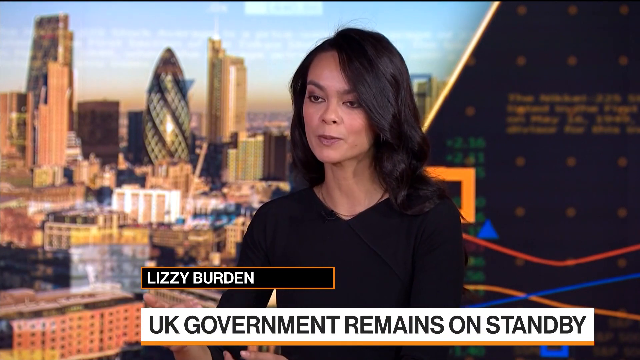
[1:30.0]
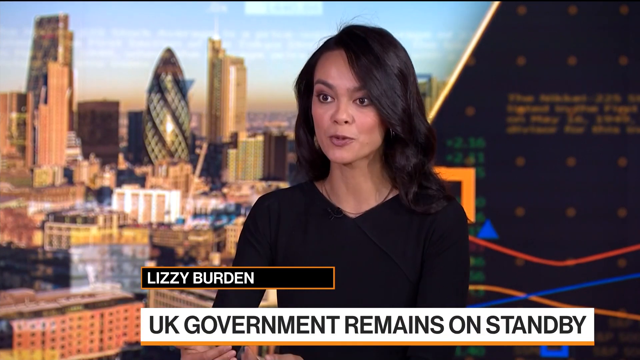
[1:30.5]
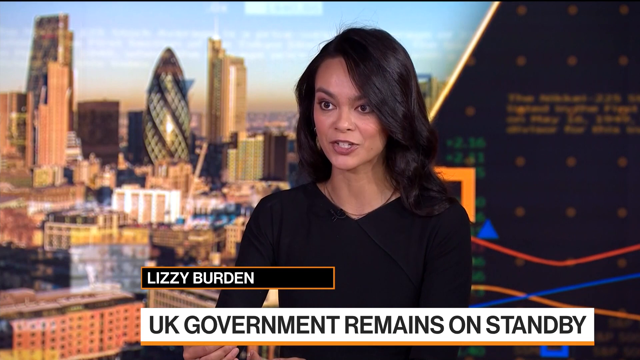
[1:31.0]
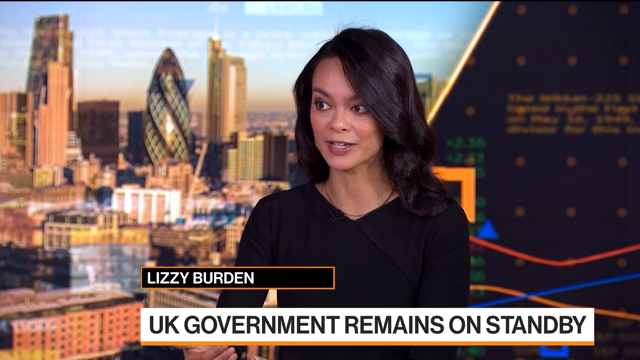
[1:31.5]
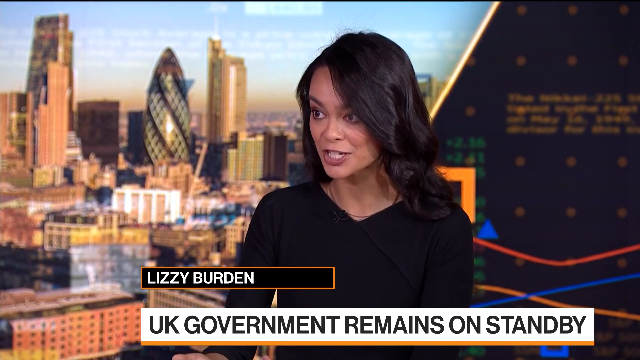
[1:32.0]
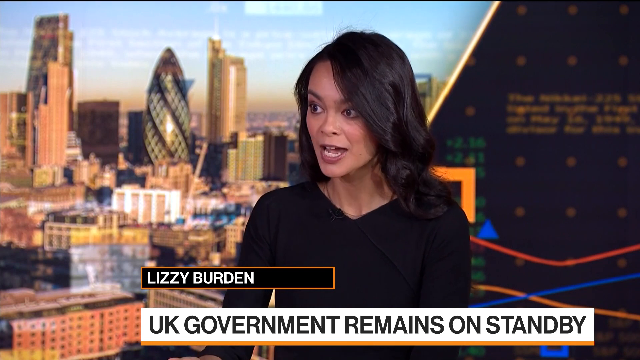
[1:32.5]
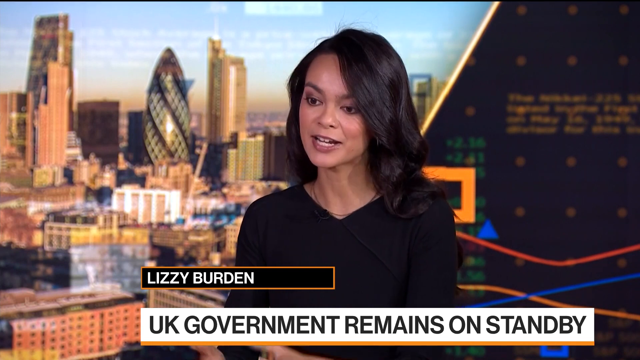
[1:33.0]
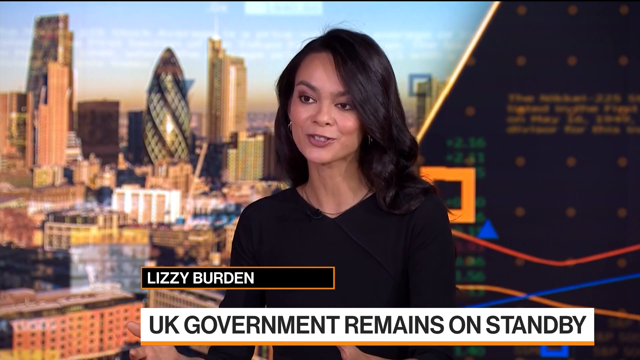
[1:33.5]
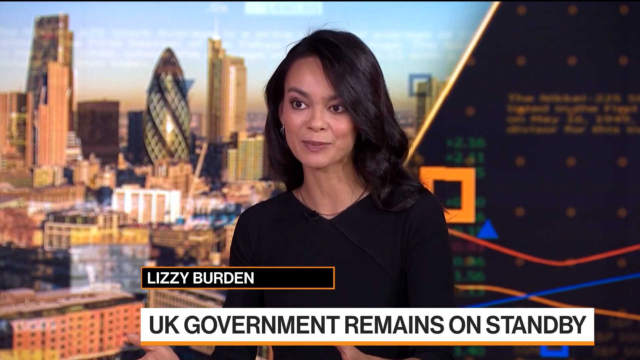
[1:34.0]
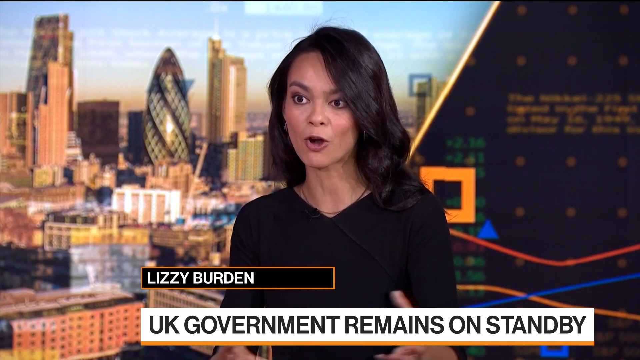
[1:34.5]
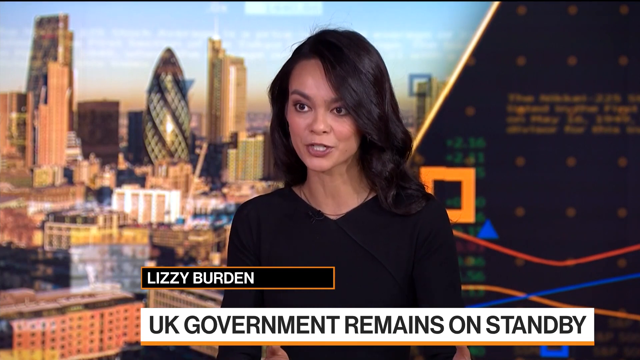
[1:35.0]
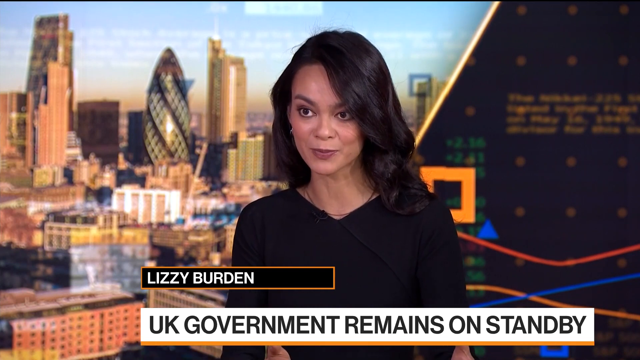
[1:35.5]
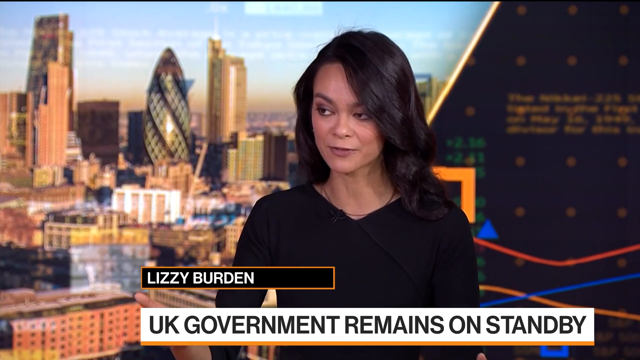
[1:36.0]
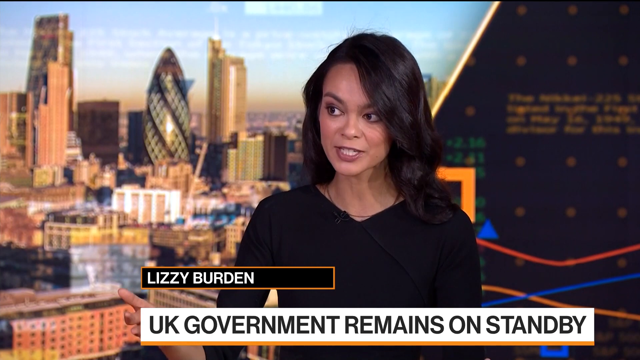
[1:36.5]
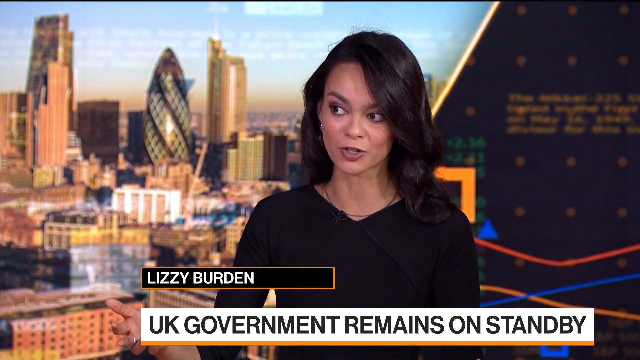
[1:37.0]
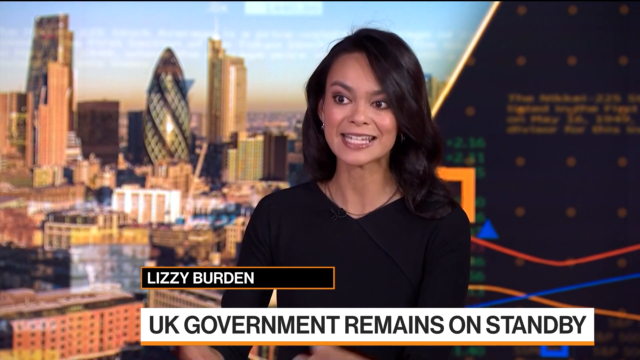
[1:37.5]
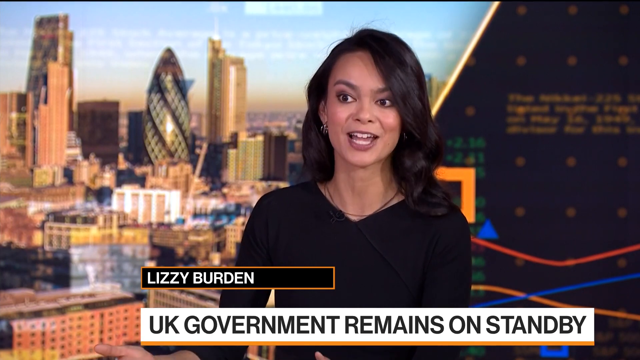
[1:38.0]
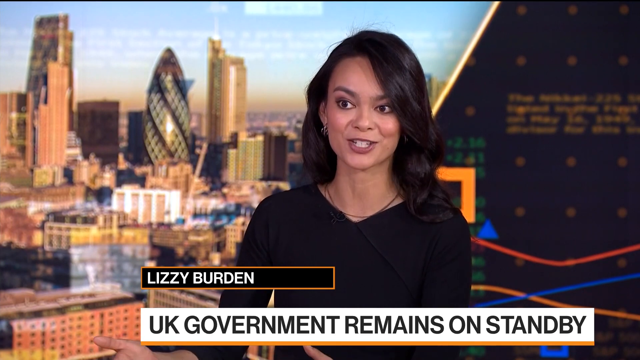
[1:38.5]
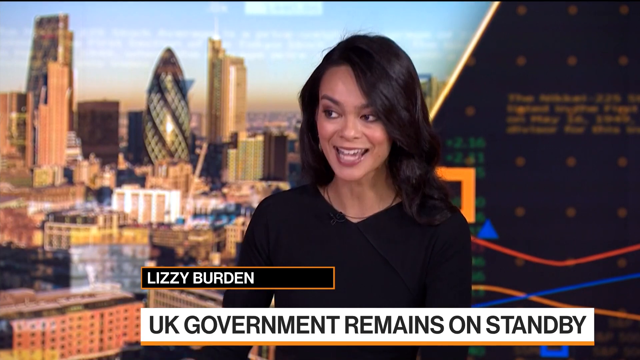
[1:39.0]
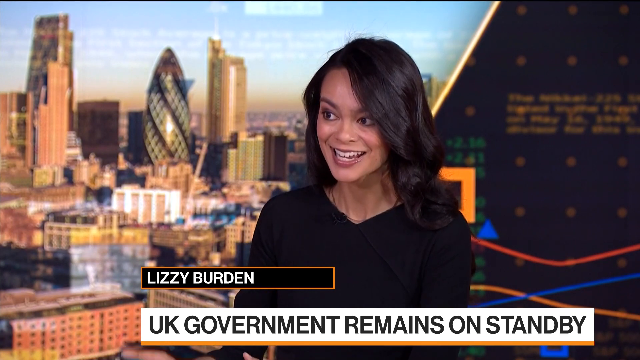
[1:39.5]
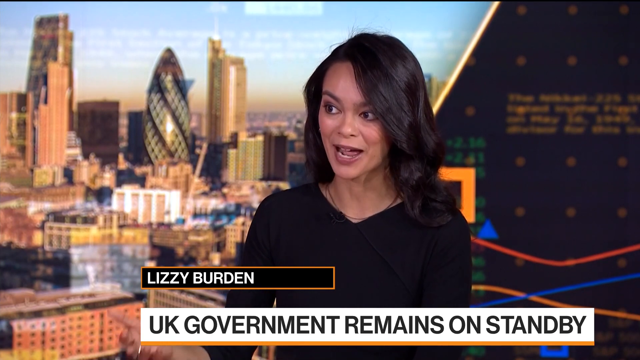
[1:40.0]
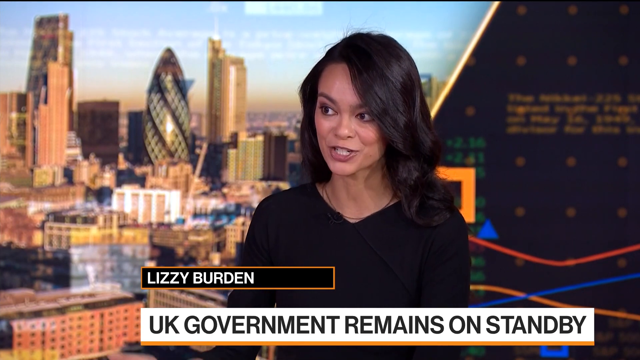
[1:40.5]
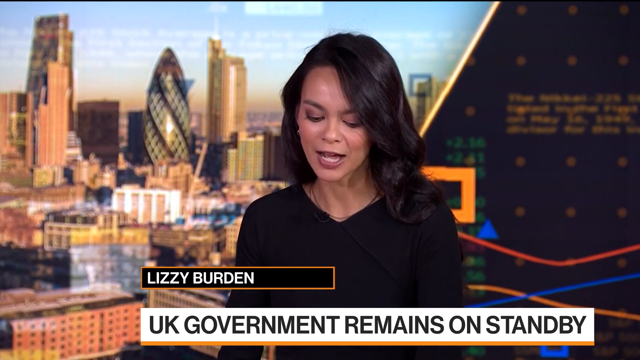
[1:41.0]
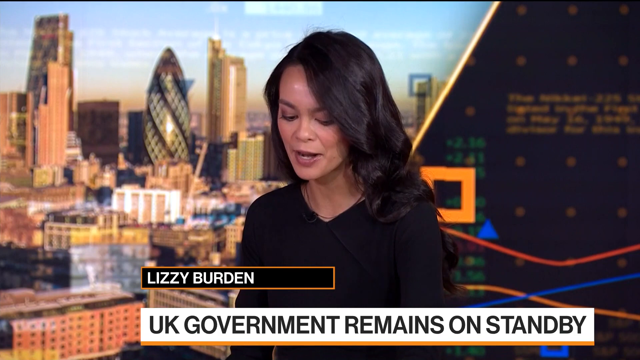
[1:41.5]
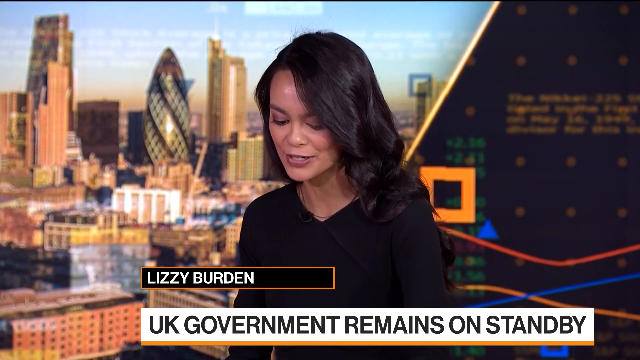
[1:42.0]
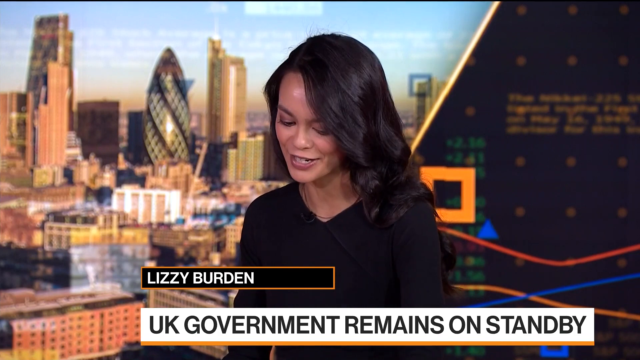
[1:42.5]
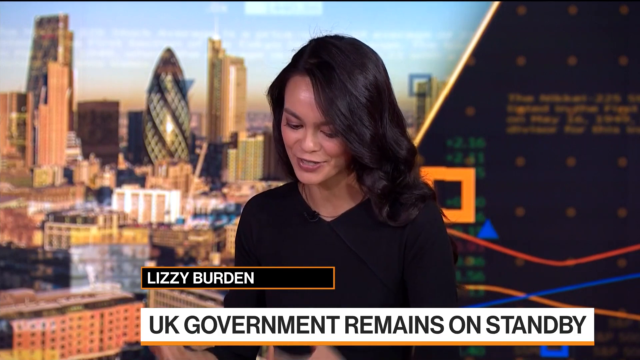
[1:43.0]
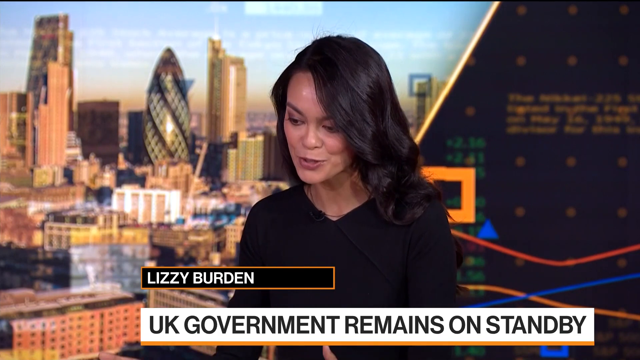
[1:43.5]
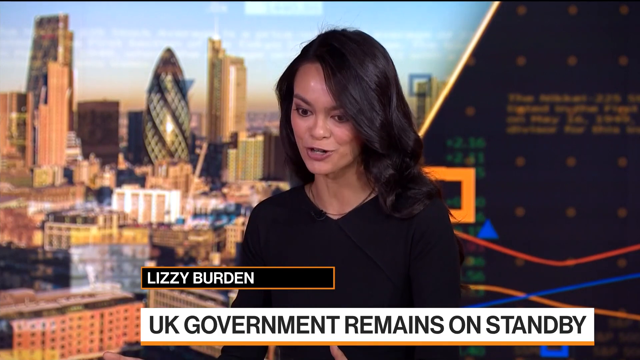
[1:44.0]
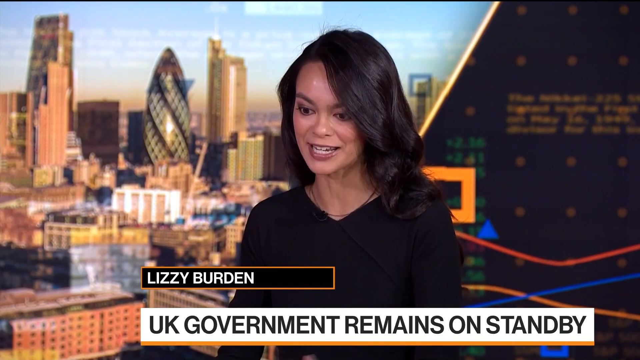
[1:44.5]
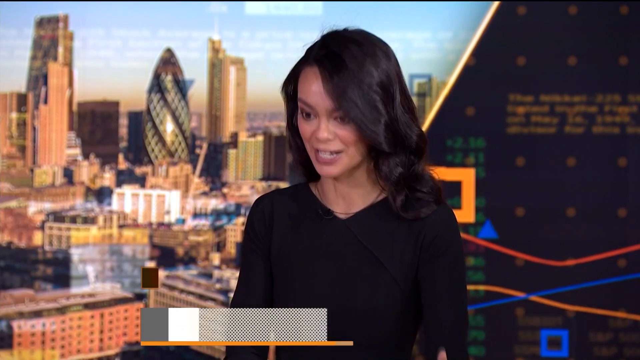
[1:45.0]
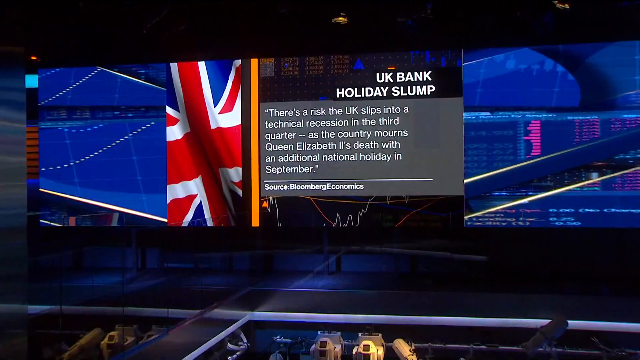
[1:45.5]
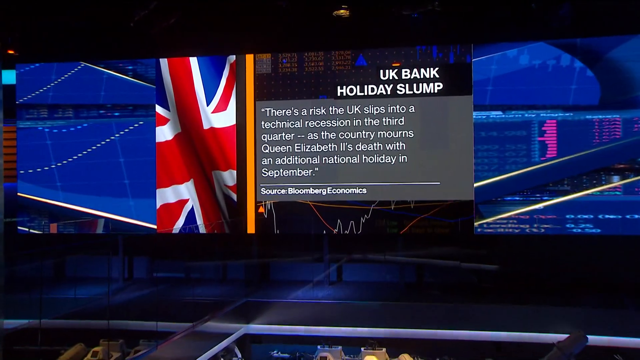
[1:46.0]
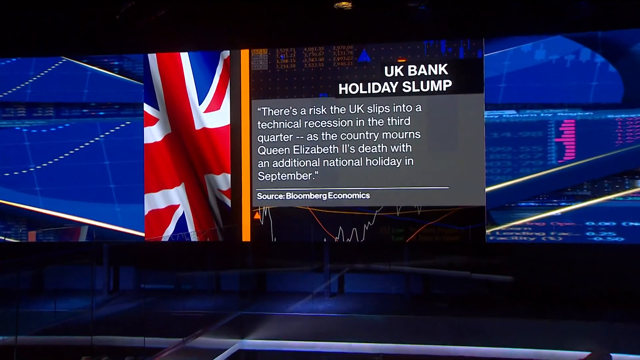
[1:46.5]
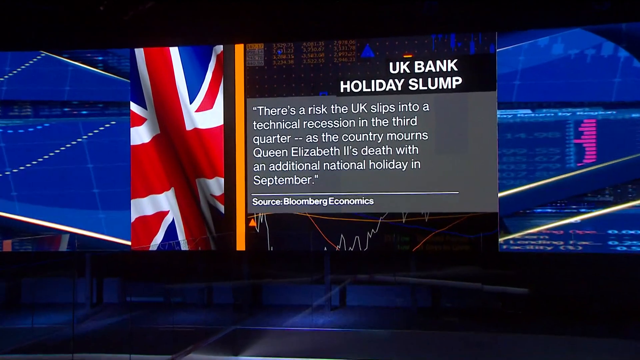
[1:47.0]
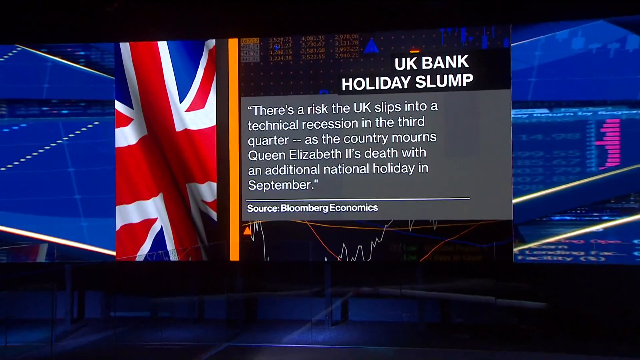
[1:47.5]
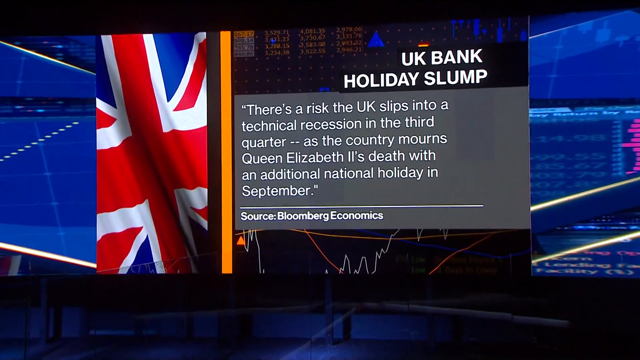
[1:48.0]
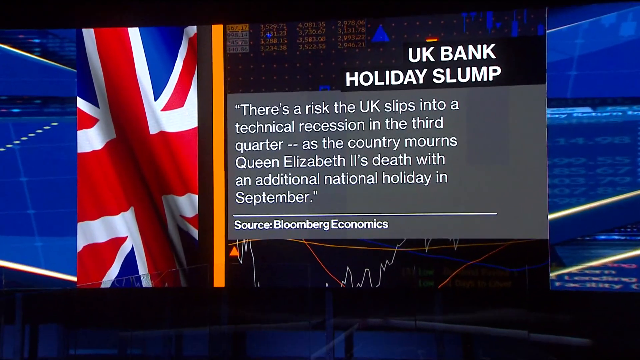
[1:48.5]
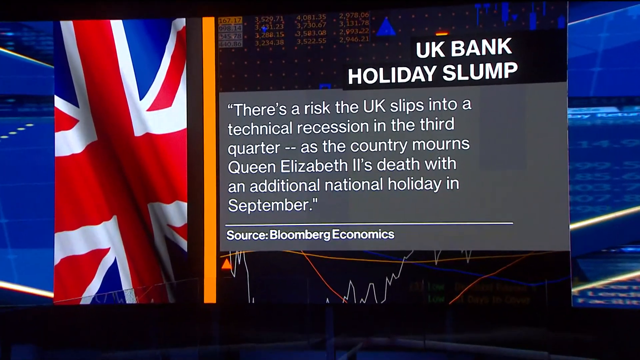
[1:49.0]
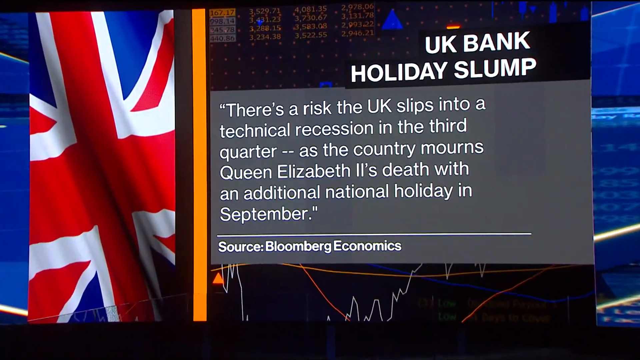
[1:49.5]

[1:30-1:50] Lizzie Burden, the main anchor of this television show on Bloomberg, continues talking about what is going on in England. At the very end the video cuts away from her to one of the large screens in the studio, which shows a small central graphic of a British flag next to a graphic reading "UK Bank holiday slump" and "There's a risk the US slips into a technical recession in the third quarter as the country mourns Queen Elizabeth The second's death with additional national holiday in September," with the source given as Bloomberg economics.